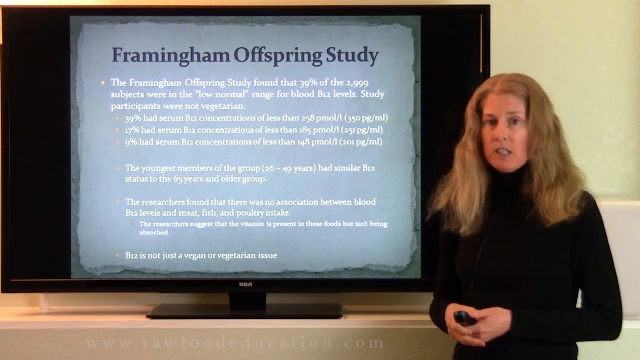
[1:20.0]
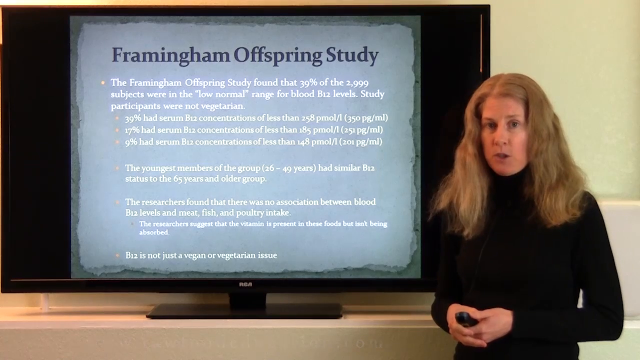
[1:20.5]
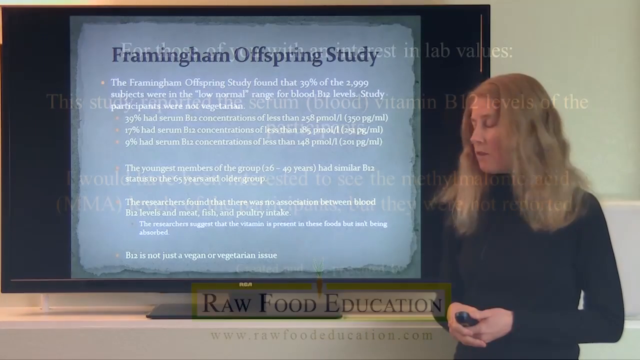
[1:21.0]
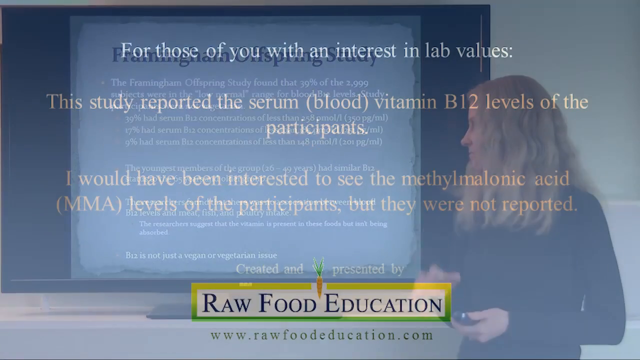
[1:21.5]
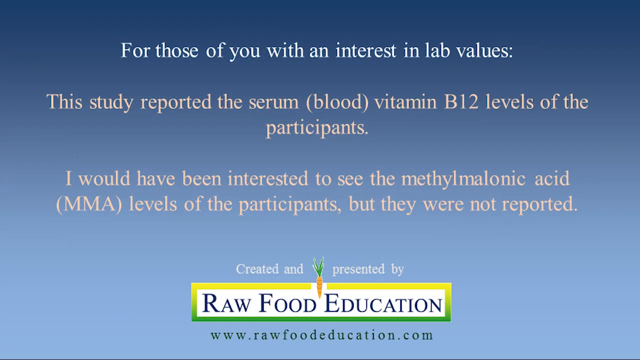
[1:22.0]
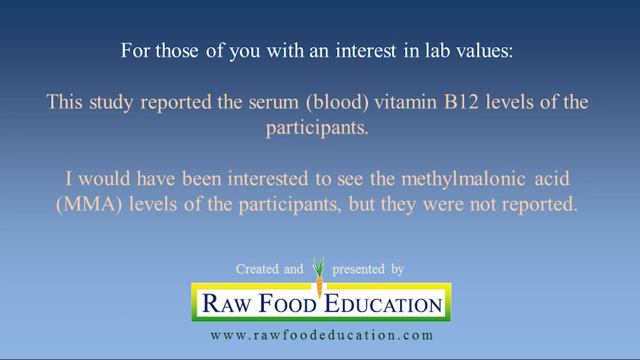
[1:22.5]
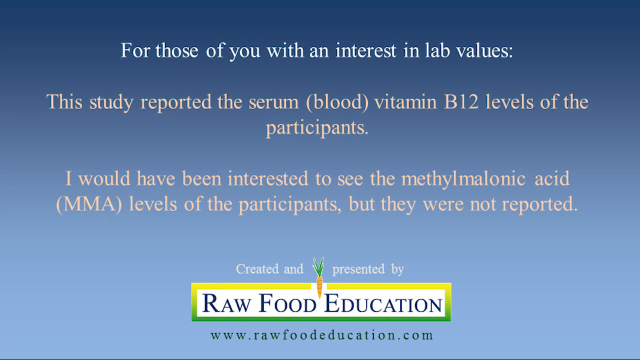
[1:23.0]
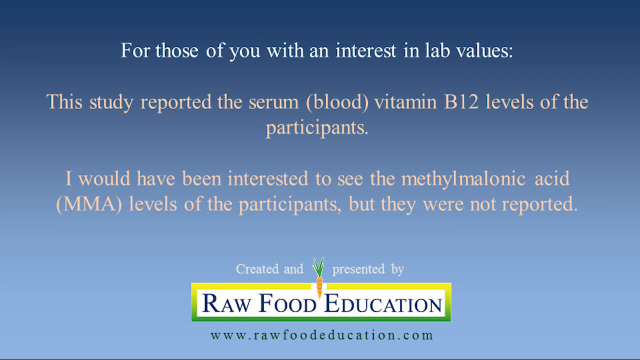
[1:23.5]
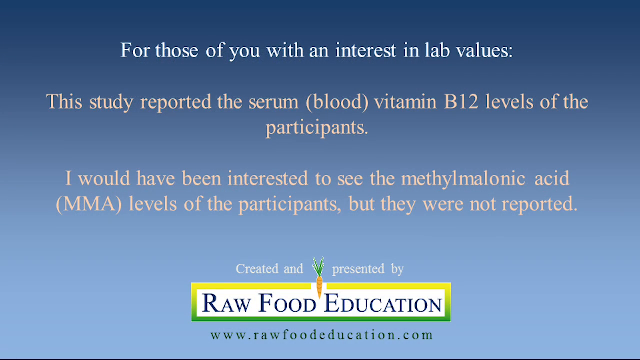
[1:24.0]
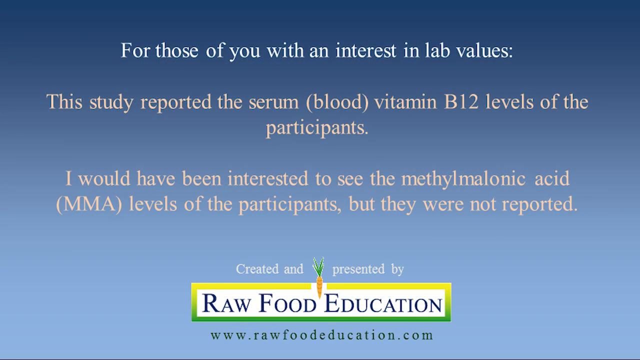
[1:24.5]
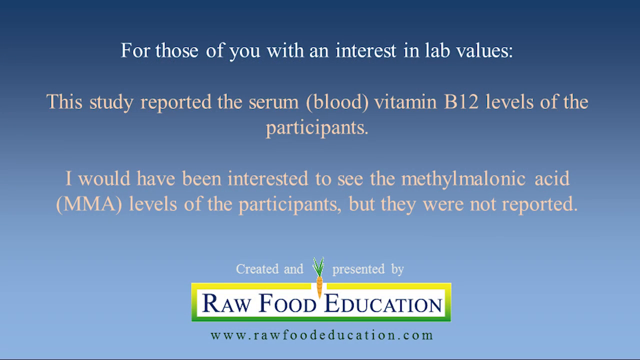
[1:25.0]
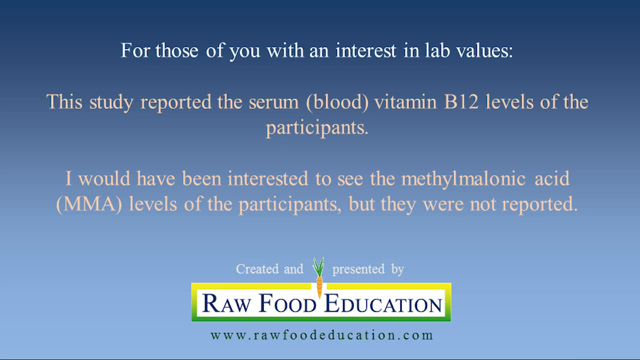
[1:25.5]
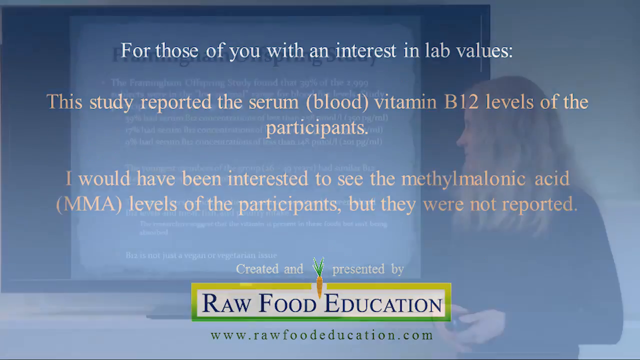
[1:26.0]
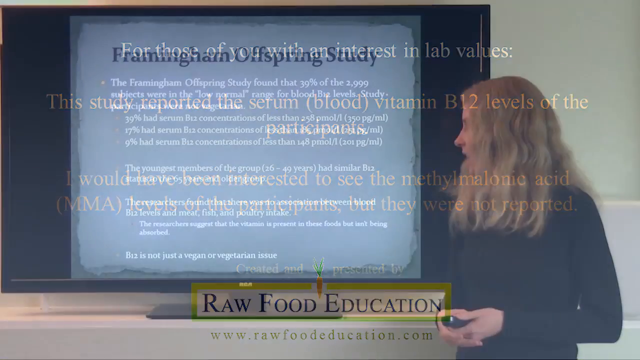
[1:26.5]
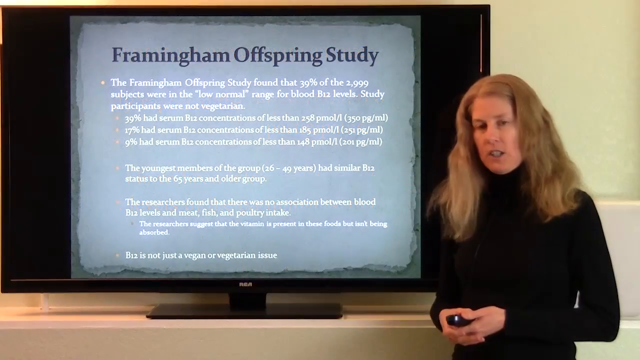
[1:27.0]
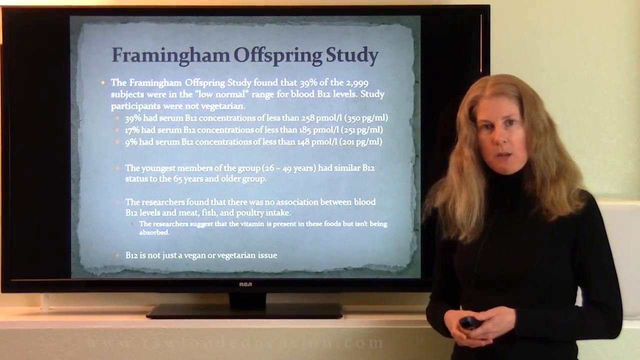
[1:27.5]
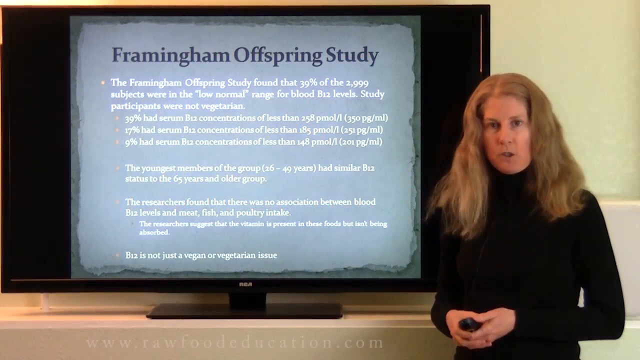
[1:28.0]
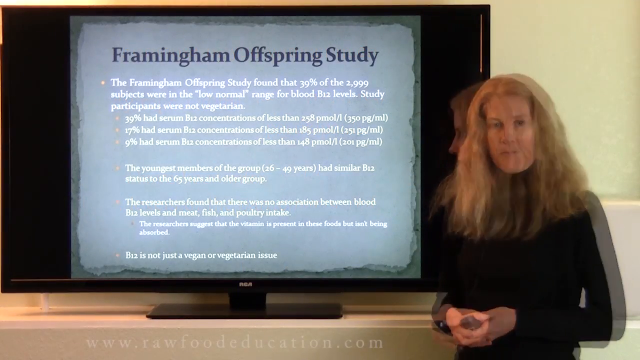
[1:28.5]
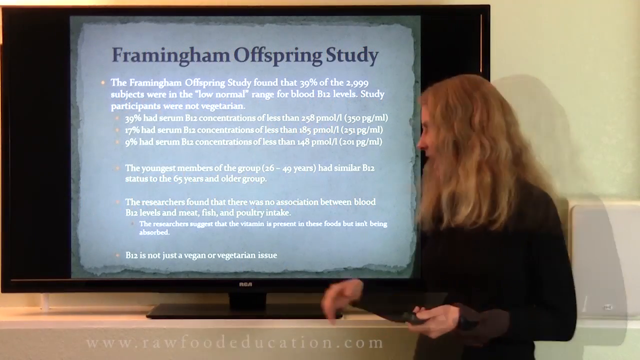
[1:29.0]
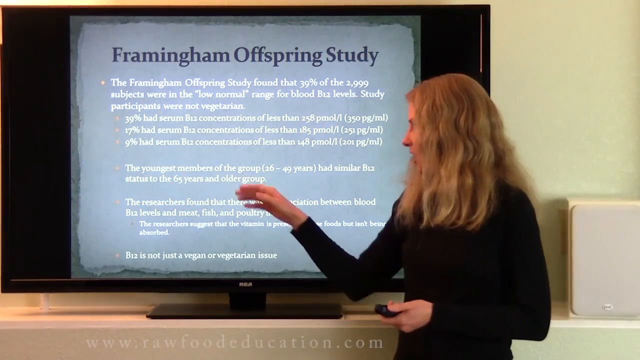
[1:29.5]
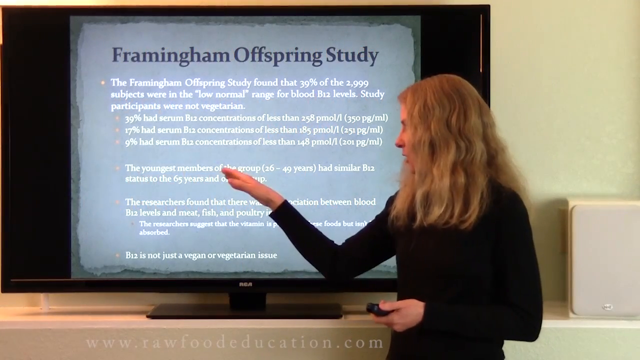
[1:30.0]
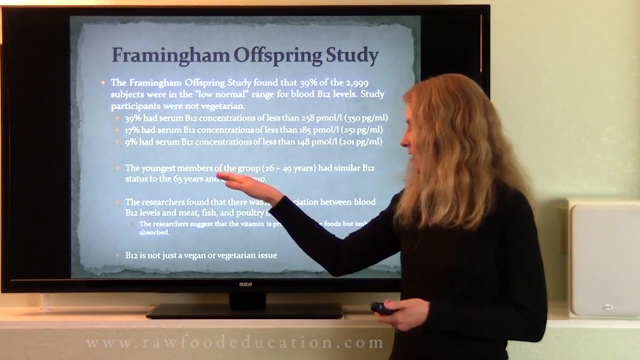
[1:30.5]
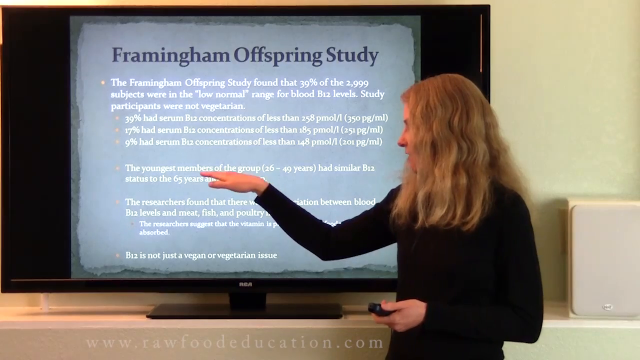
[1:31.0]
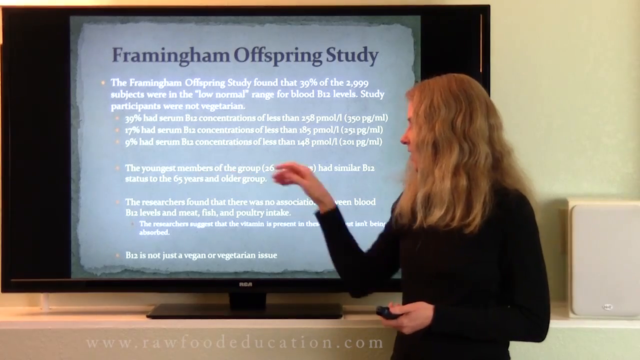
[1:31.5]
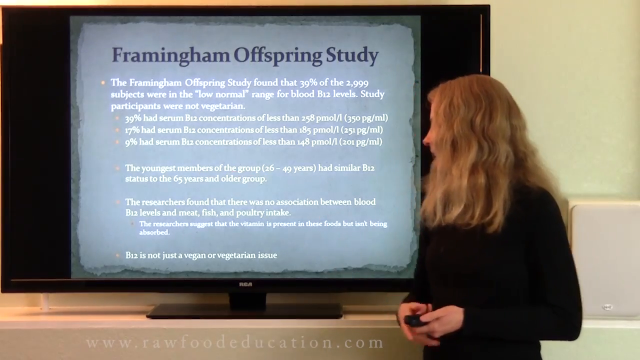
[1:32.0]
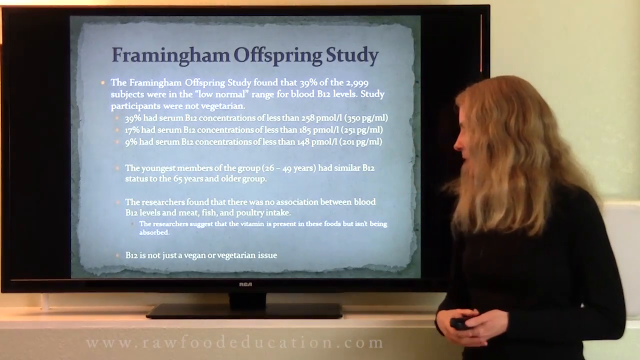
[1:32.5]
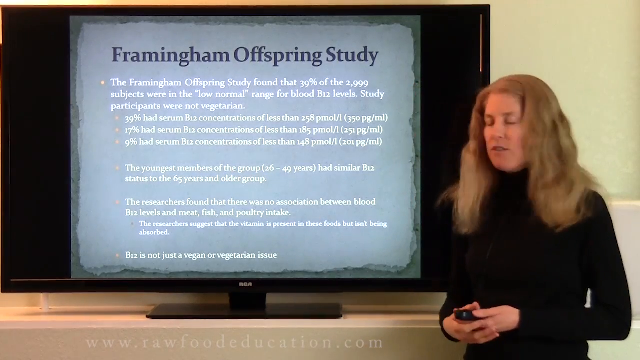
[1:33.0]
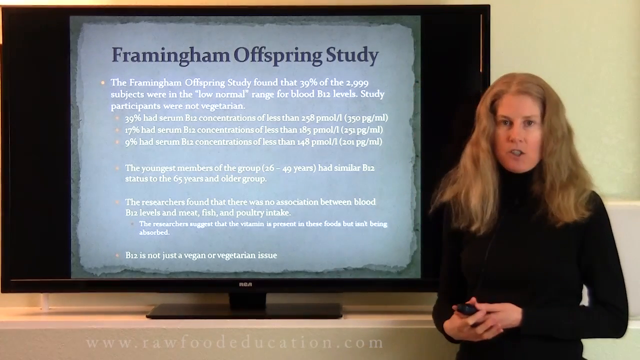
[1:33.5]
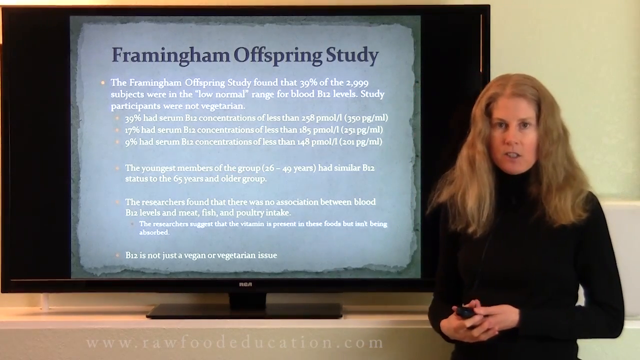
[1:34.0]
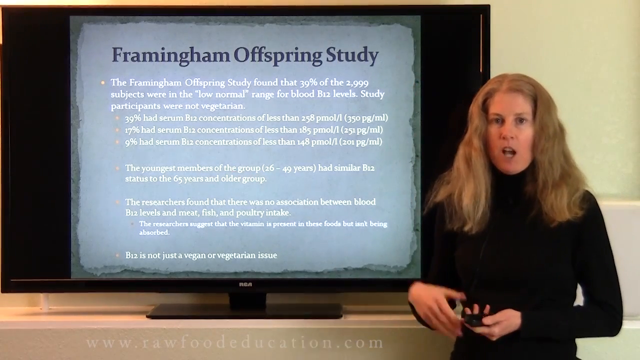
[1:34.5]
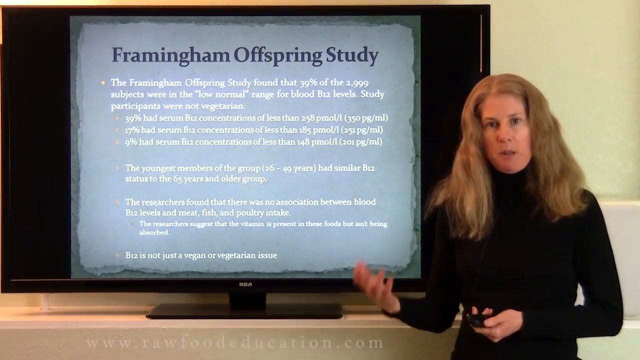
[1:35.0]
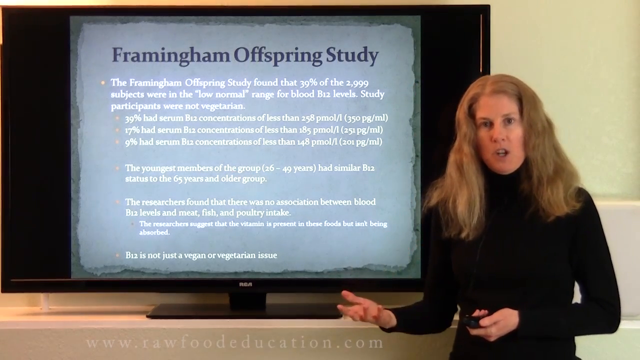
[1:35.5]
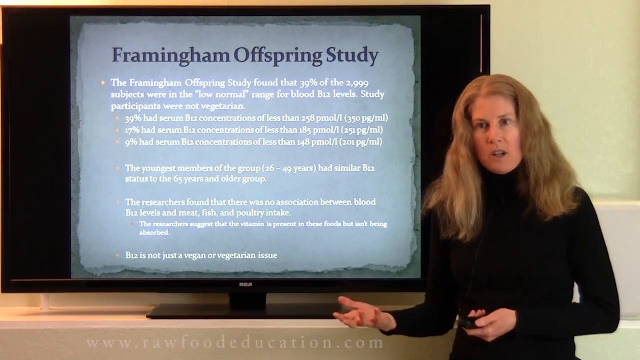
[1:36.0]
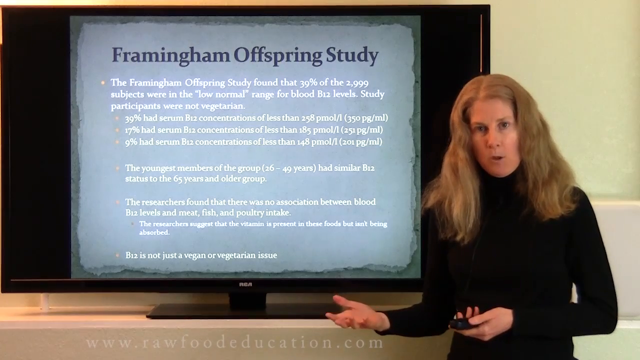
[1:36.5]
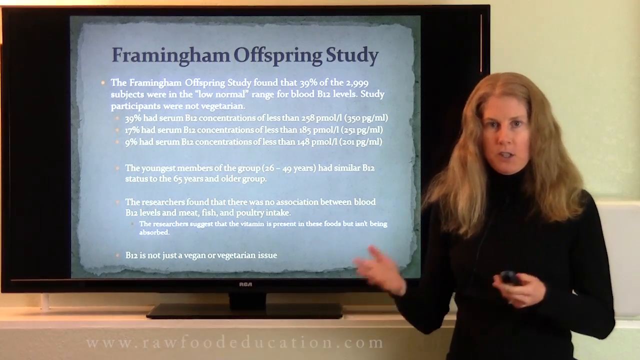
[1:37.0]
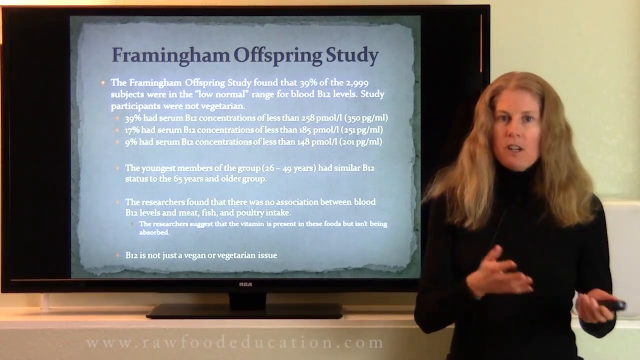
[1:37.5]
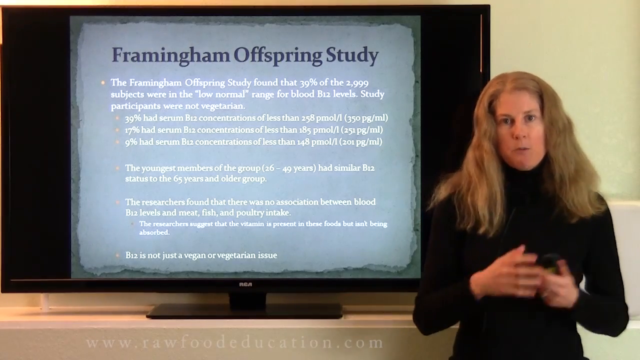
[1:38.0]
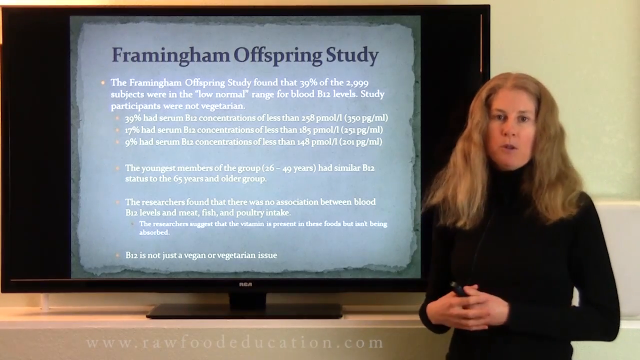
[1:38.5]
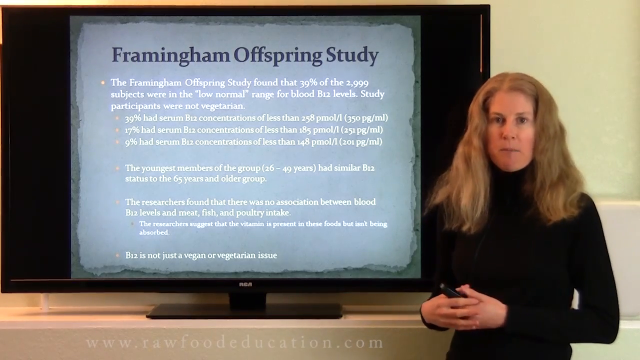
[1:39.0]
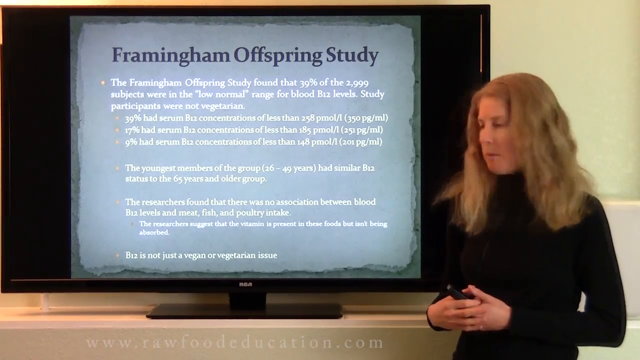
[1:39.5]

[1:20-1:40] The woman, Caucasian, in black, with medium-length brown hair, continues with the Framingham Offspring Study. The video then transitions to a screen with a sort of vertical blue gradient background, going from dark blue to a kind of lighter blue at the bottom. The text reads "for those of you with an interest in the lab values, this study reported the serum blood vitamin B12 levels of the participants" and "I would have been interested to see the methylmalonic acid MMA levels of the participants, but they were not reported", with "created and presented by Raw Foods Education" also on this screen. The video then transitions back to the woman with the Framingham Offspring Study.